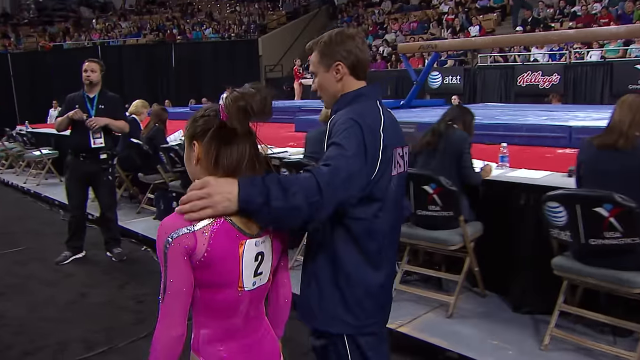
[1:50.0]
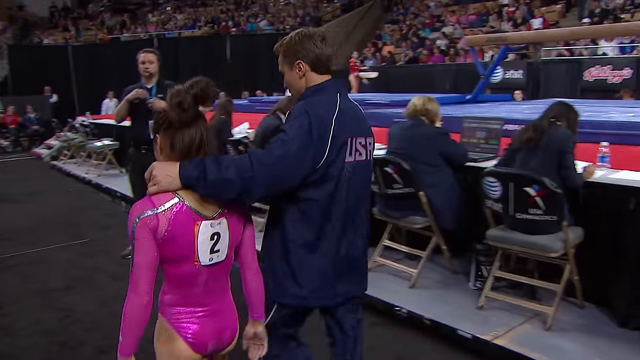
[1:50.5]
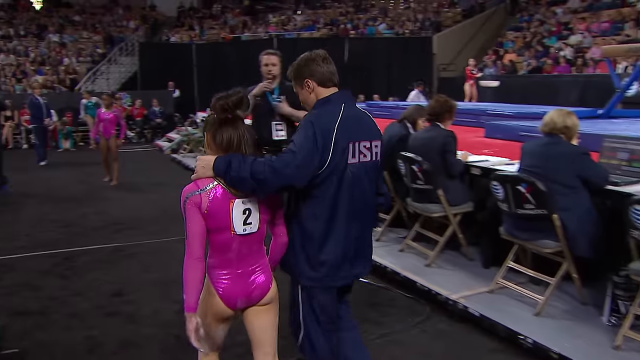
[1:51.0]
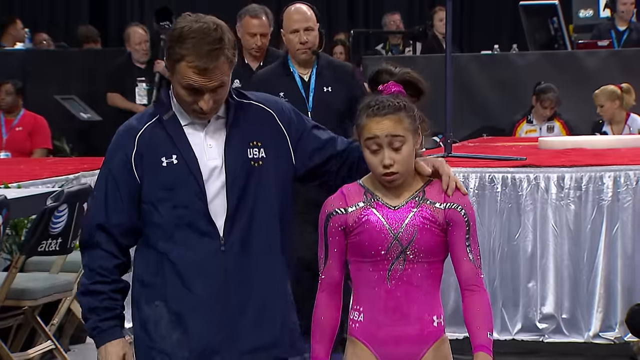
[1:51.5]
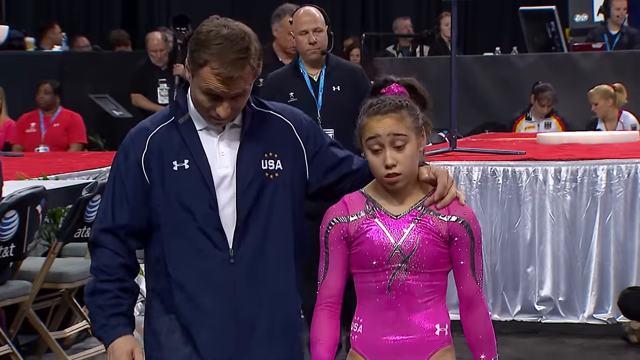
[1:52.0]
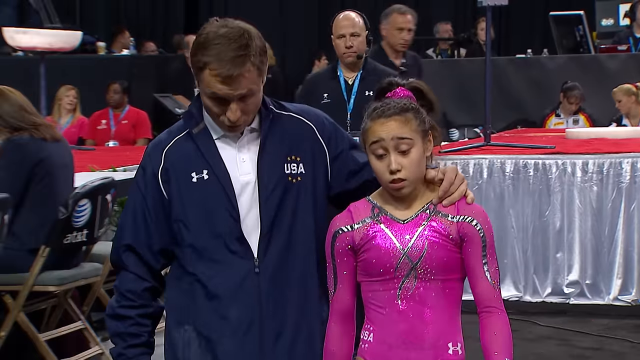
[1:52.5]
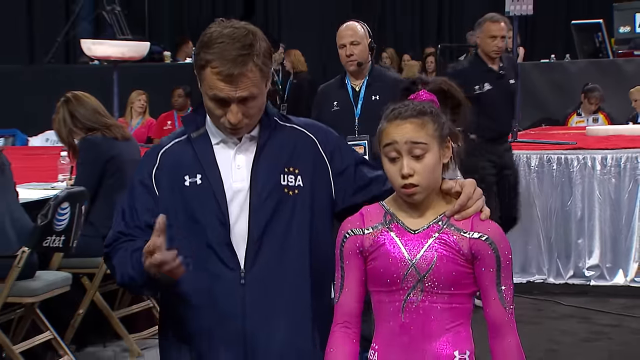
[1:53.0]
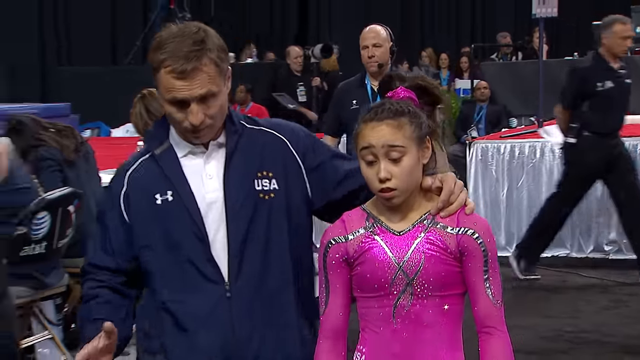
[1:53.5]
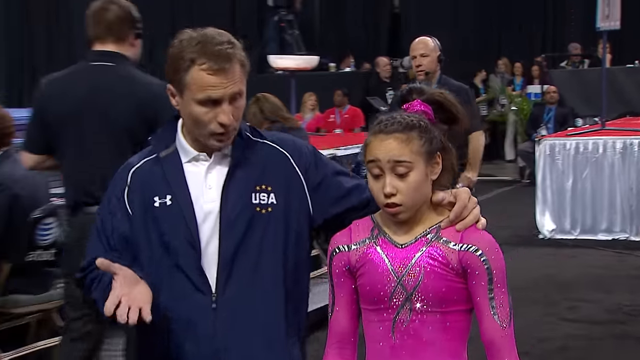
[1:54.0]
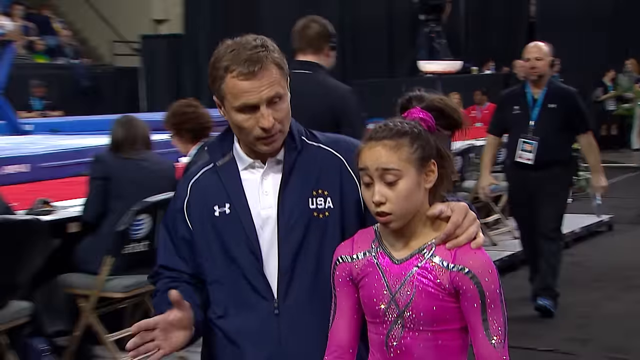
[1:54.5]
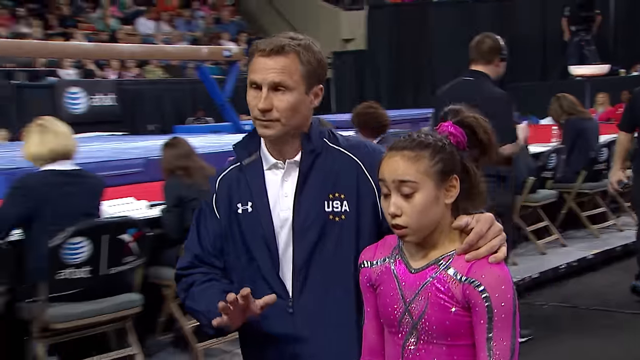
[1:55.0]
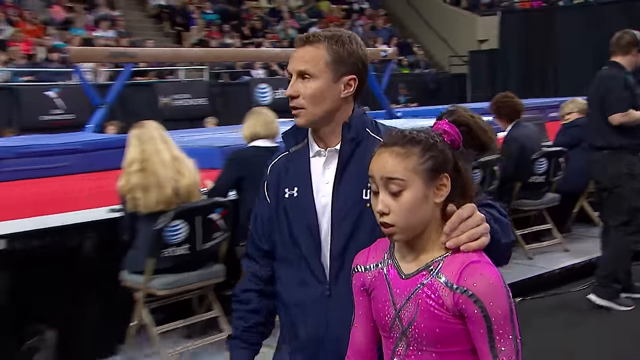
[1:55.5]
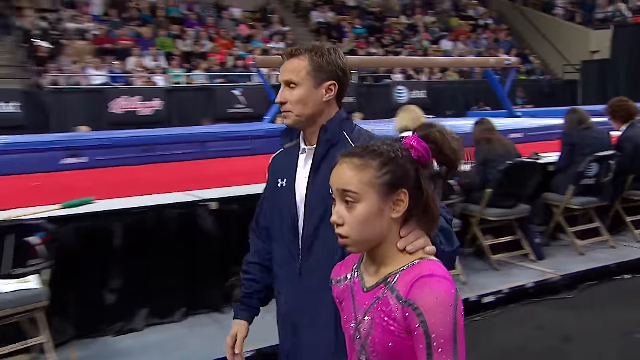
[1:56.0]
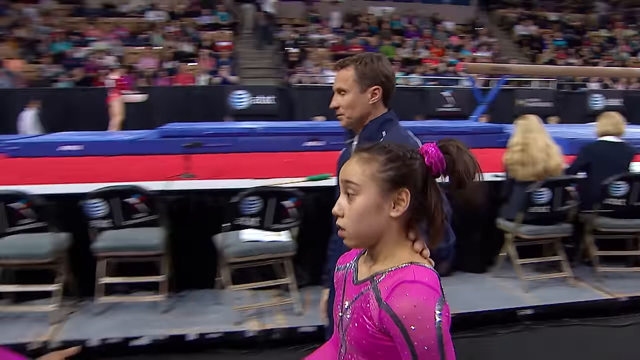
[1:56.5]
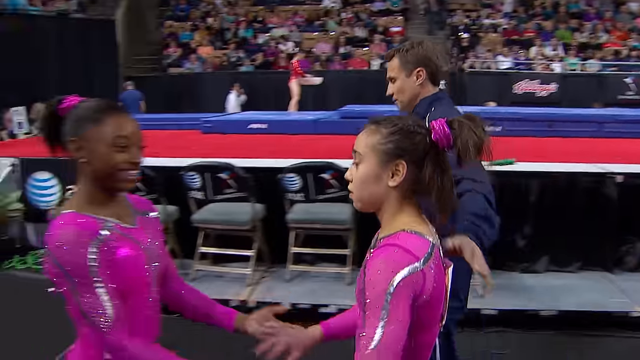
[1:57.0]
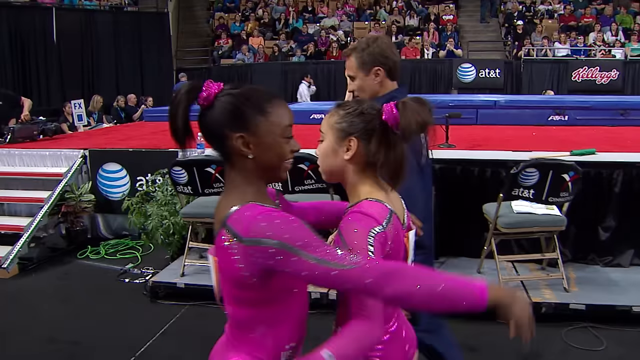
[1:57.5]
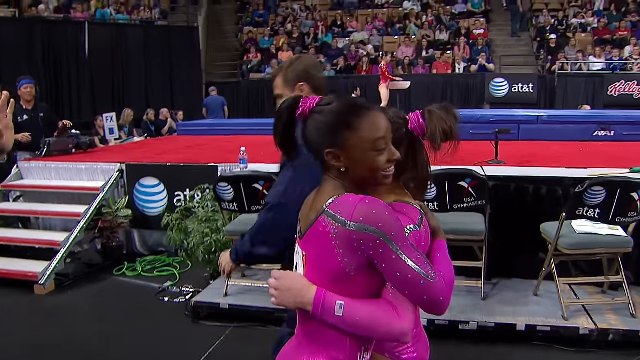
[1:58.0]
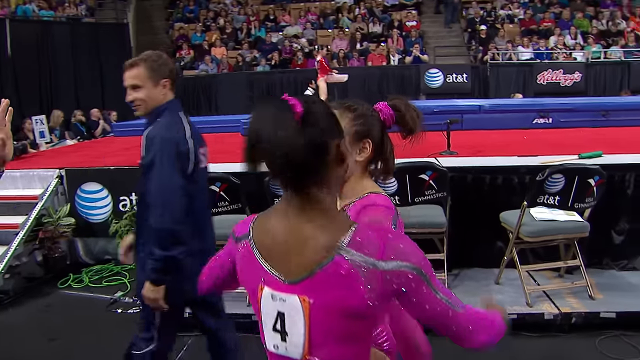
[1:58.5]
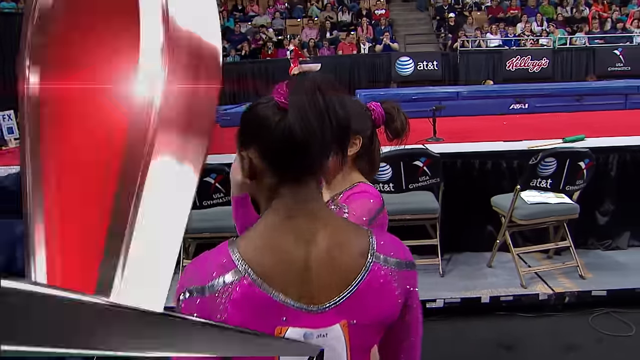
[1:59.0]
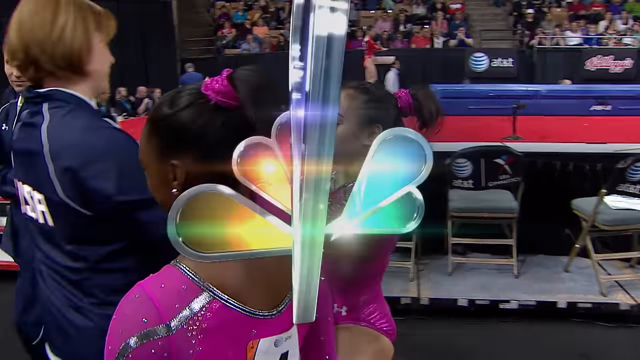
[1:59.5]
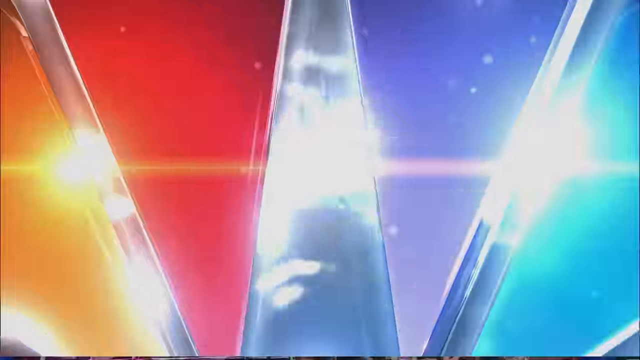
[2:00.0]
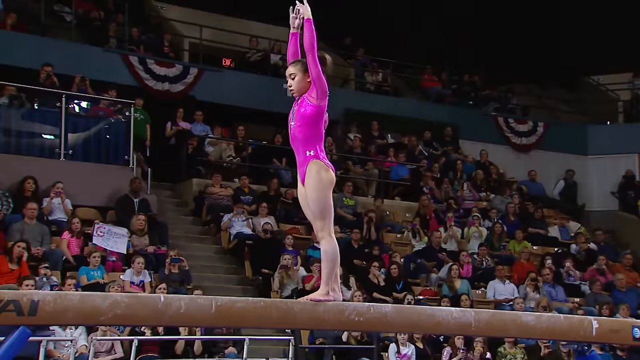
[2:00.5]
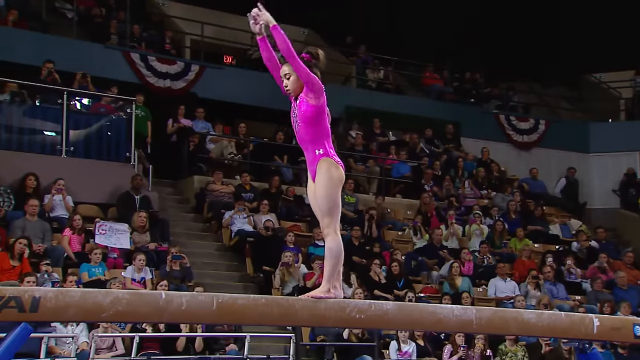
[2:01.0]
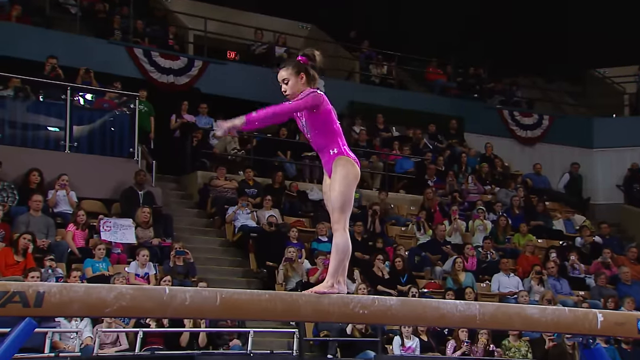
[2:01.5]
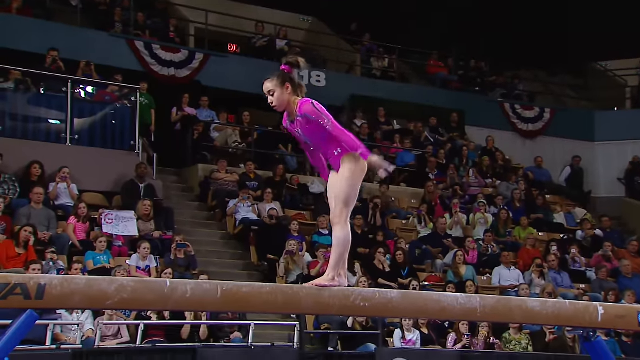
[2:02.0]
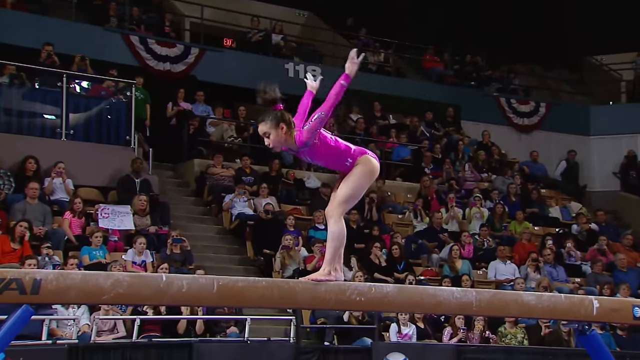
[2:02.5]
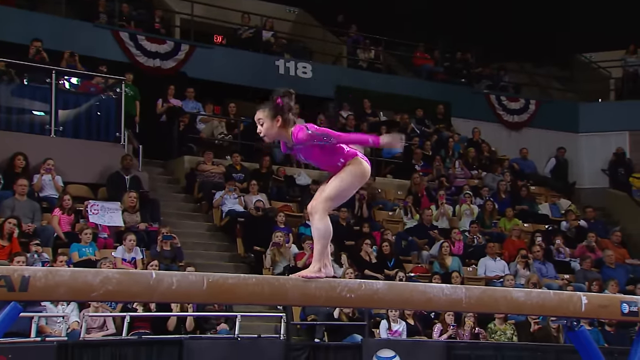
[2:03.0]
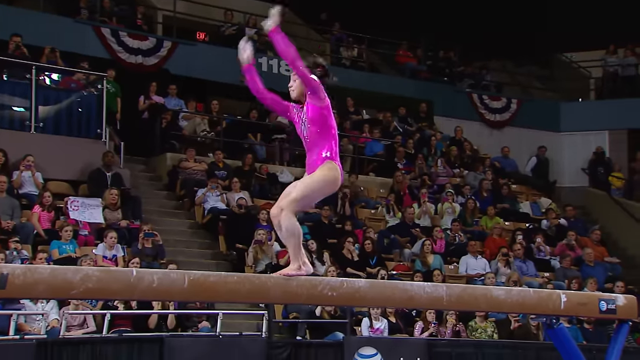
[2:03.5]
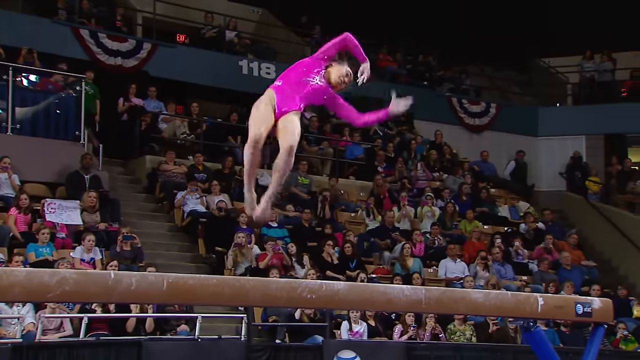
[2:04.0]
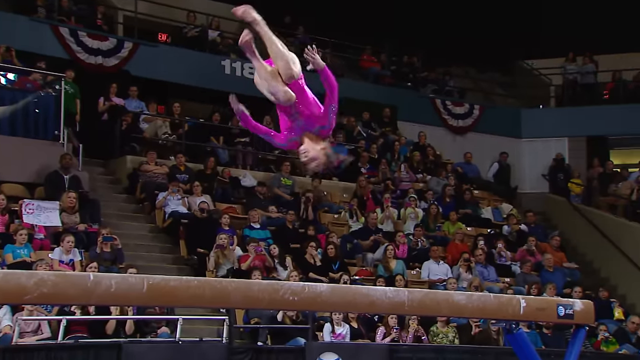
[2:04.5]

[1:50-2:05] The gymnast walks with what appears to be a coach, who is wearing an Under Armour track suit with the words "USA" on it. He has his arm over the gymnast and walks her away. People walk in the background, including a man with a headset and a badge around his neck. The gymnast hugs another gymnast, who has the number 4 and wears a similar light pink outfit. The girl twists her hair. The gymnast seems tired, looking down, her hair bouncy. The two gymnasts clasp hands and smile at each other. Multiple people in the audience are in the background, and there is a lot of walking around. The coach tells the gymnast something, and she says okay; the coach then sees another coach, and the coach appears to be recording something. The video then shows the gymnast doing a somersault on the beam. Multiple chairs, all sponsored by AT&T, have people sitting in some of them and others empty. A man apparently holding a water bottle also has a headset, and the gymnast is hugging.